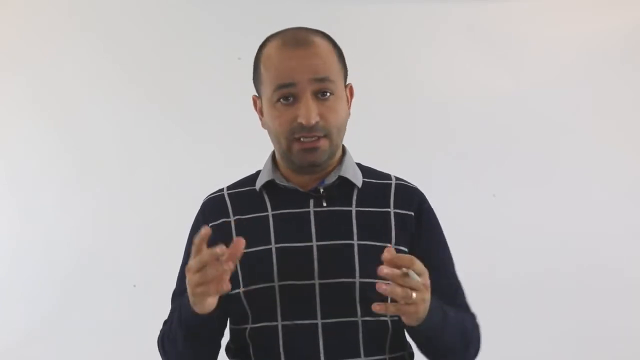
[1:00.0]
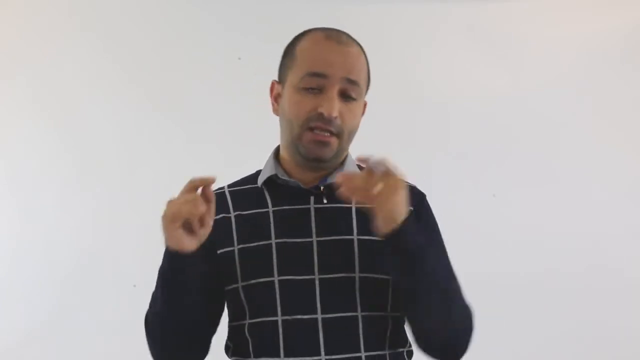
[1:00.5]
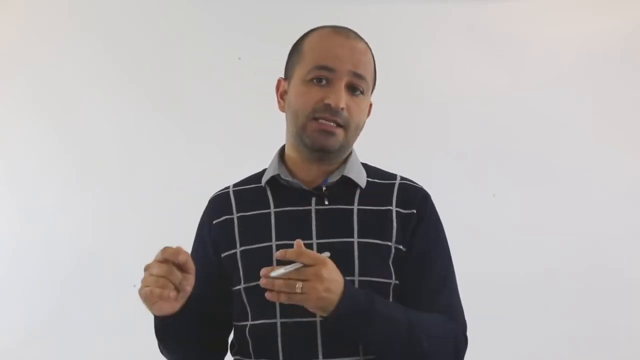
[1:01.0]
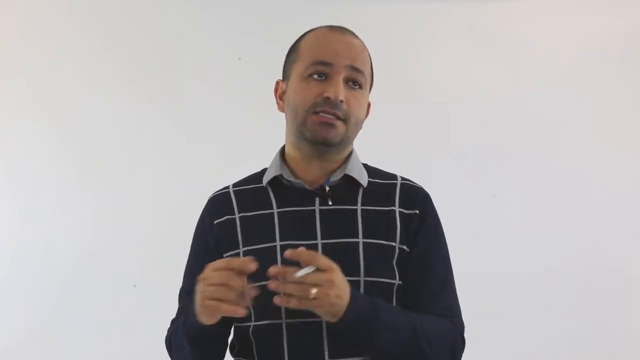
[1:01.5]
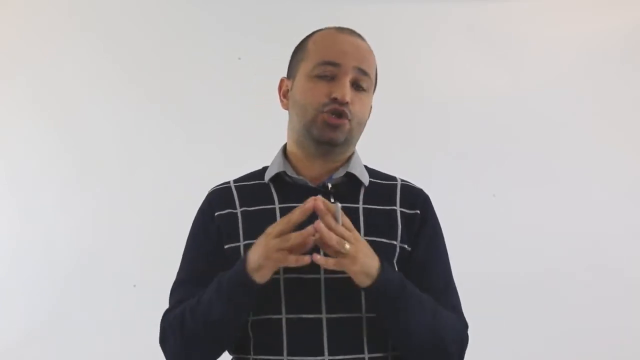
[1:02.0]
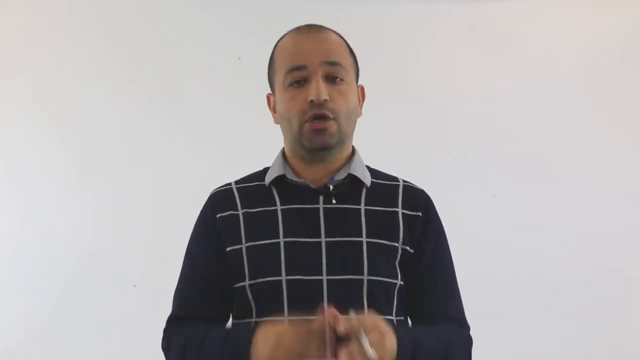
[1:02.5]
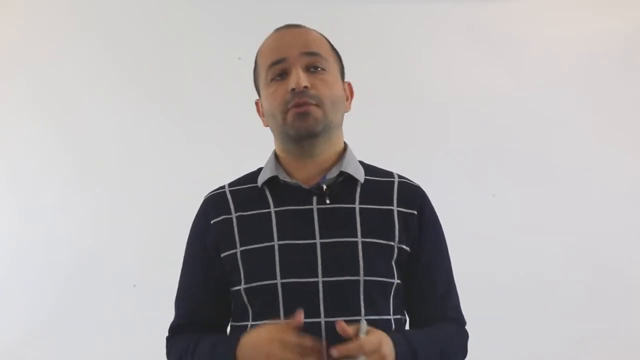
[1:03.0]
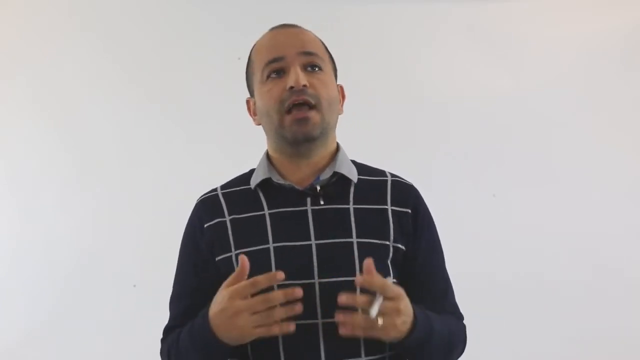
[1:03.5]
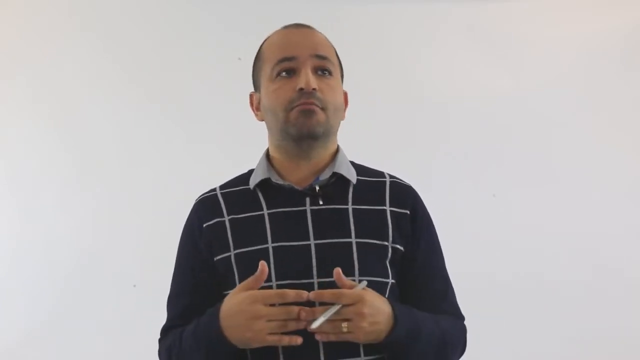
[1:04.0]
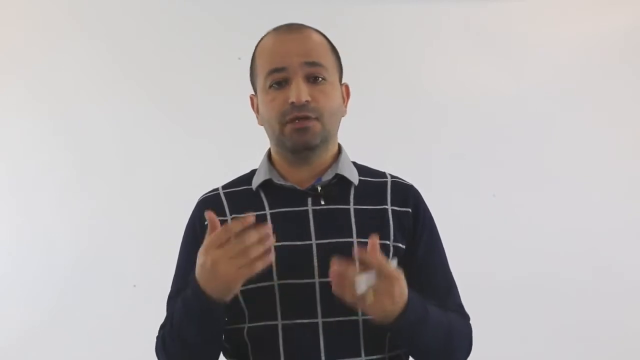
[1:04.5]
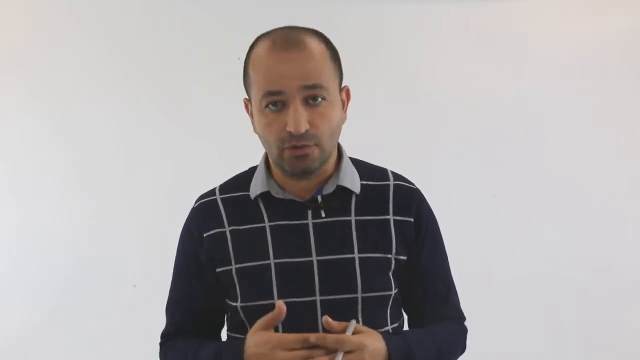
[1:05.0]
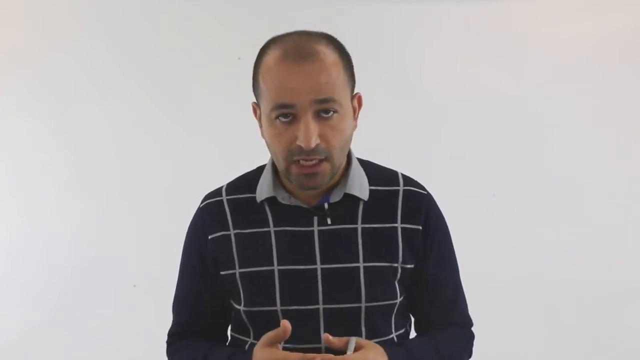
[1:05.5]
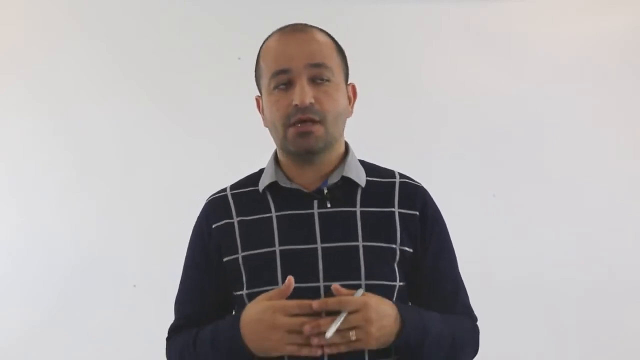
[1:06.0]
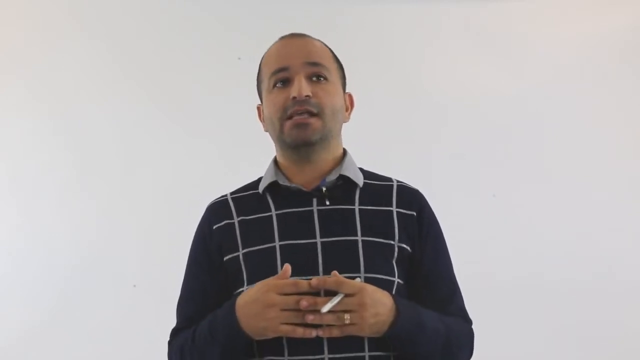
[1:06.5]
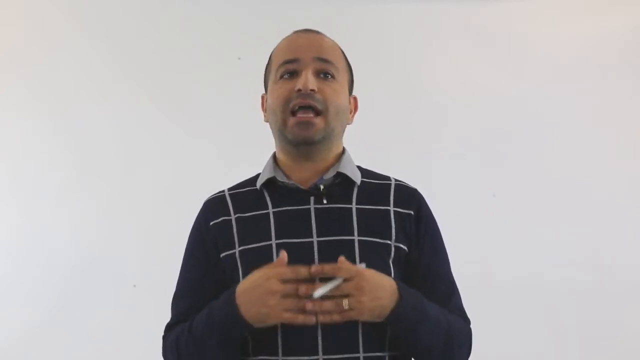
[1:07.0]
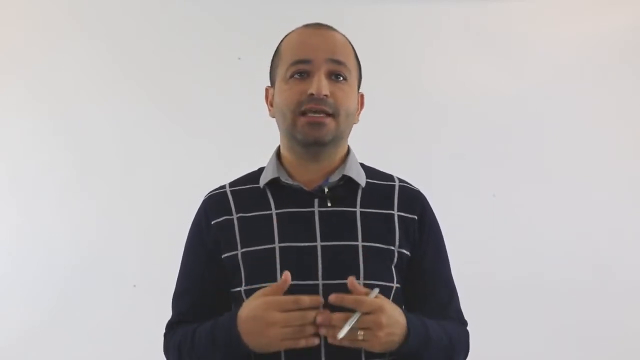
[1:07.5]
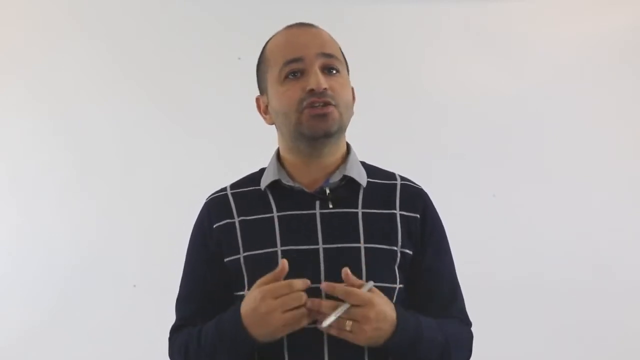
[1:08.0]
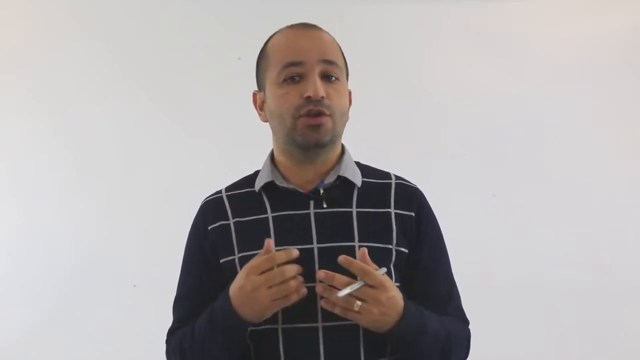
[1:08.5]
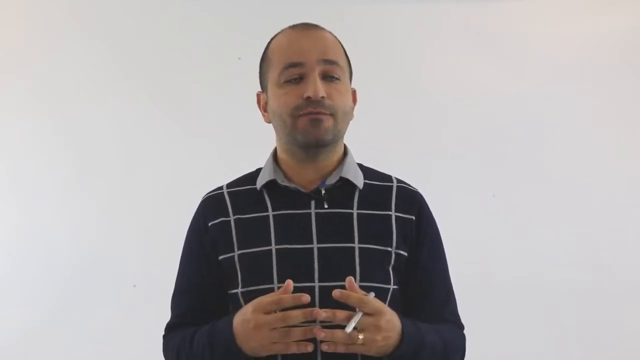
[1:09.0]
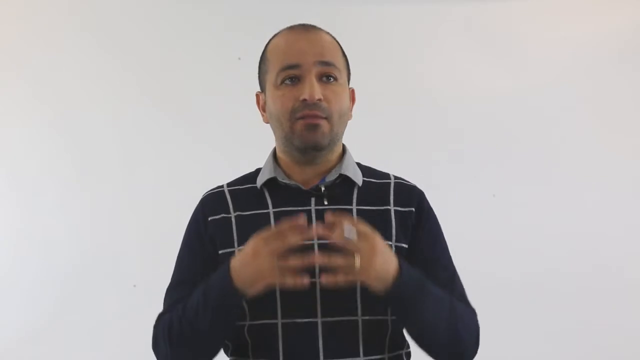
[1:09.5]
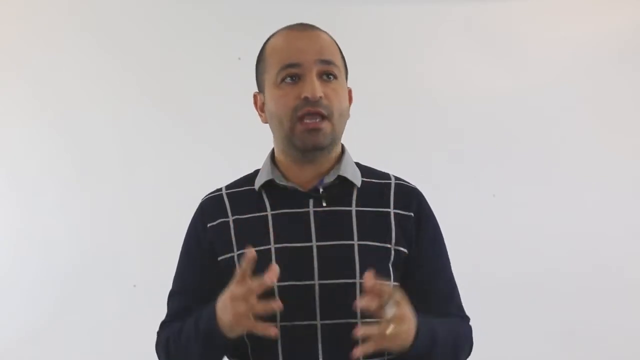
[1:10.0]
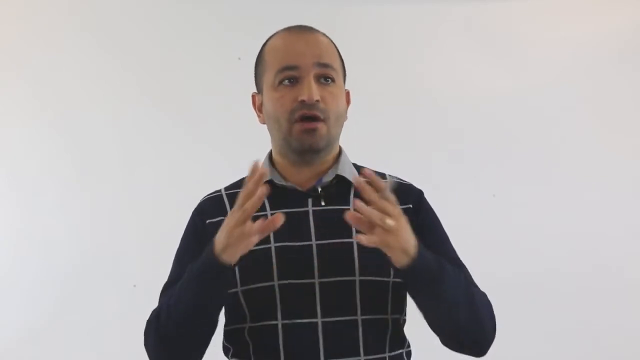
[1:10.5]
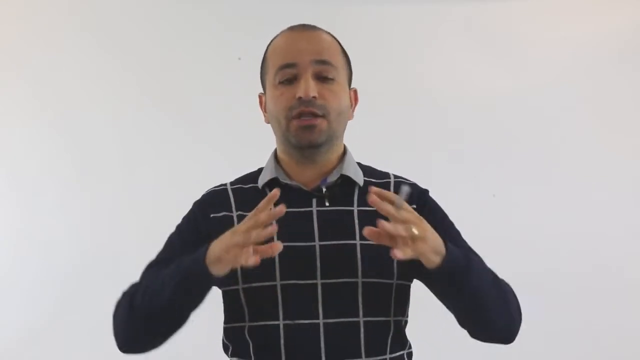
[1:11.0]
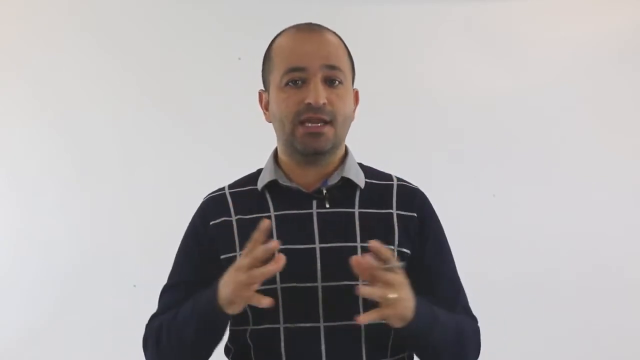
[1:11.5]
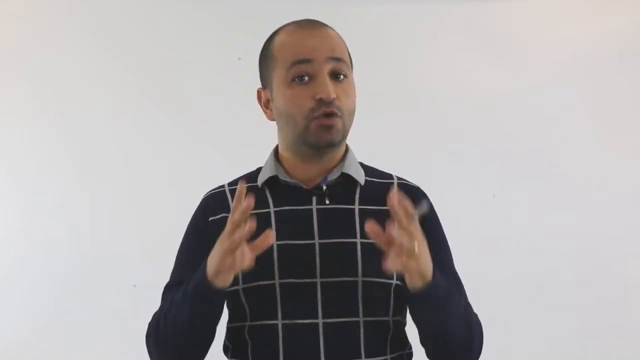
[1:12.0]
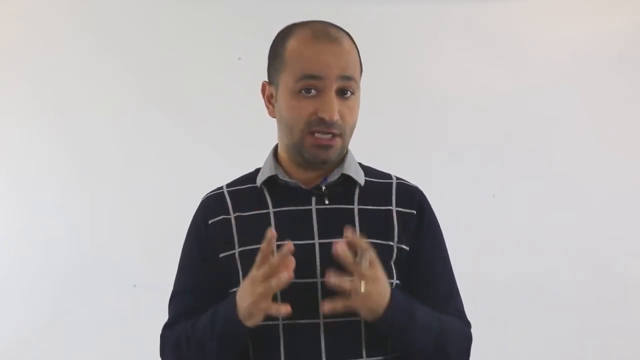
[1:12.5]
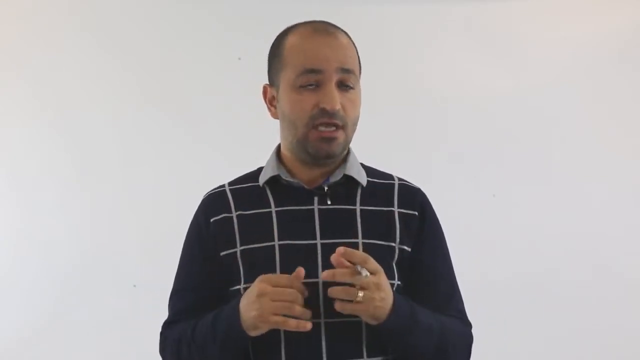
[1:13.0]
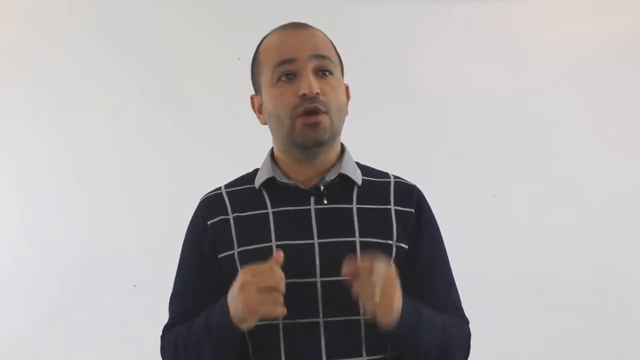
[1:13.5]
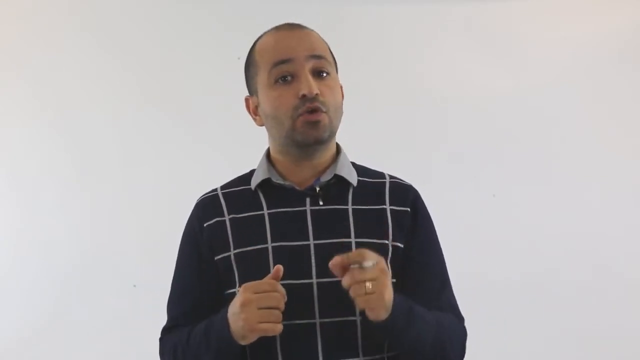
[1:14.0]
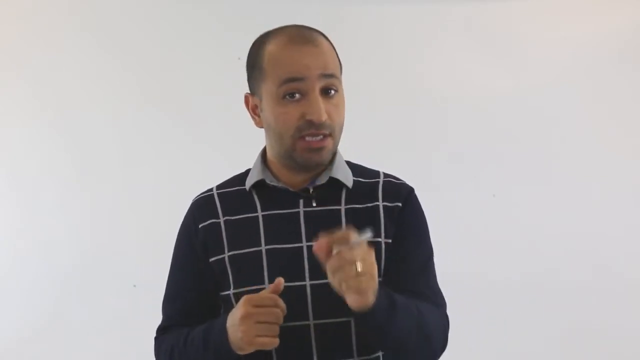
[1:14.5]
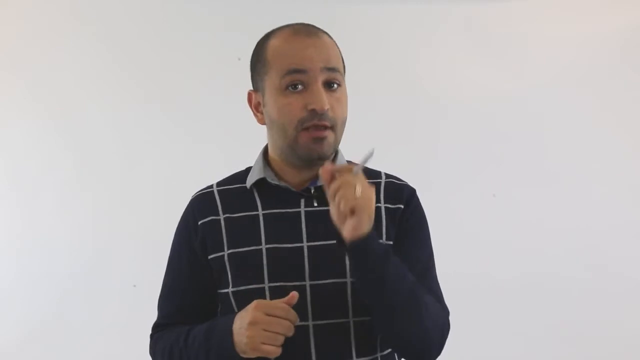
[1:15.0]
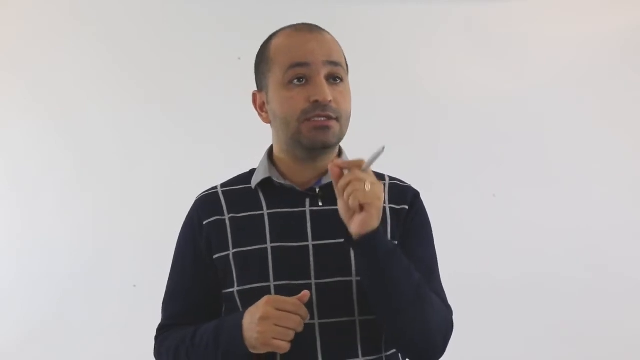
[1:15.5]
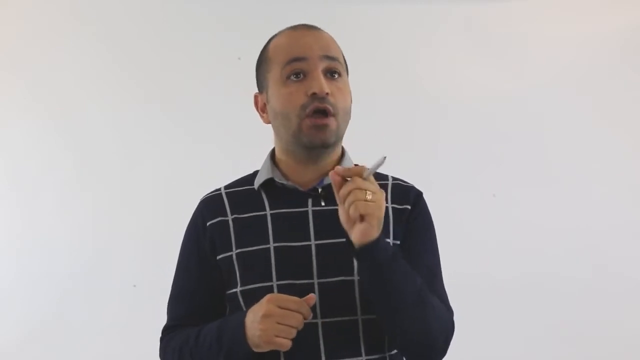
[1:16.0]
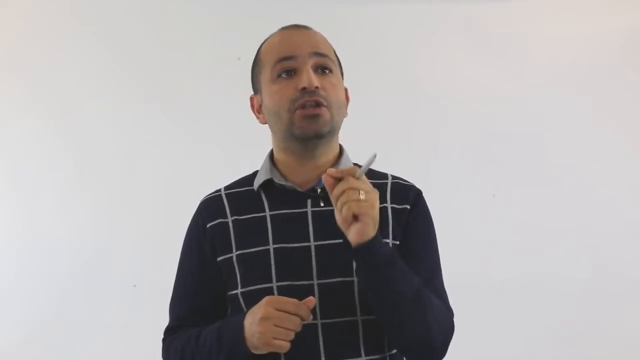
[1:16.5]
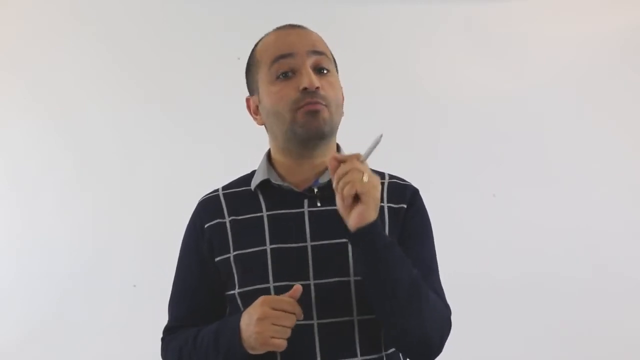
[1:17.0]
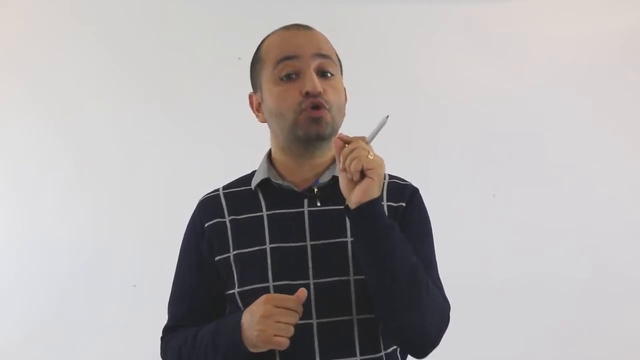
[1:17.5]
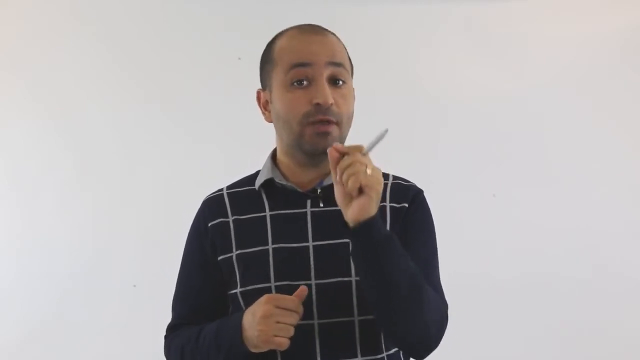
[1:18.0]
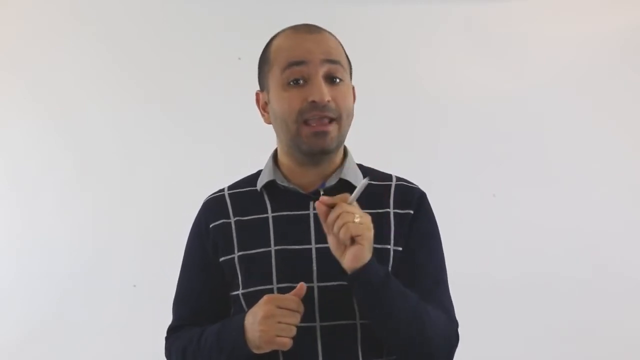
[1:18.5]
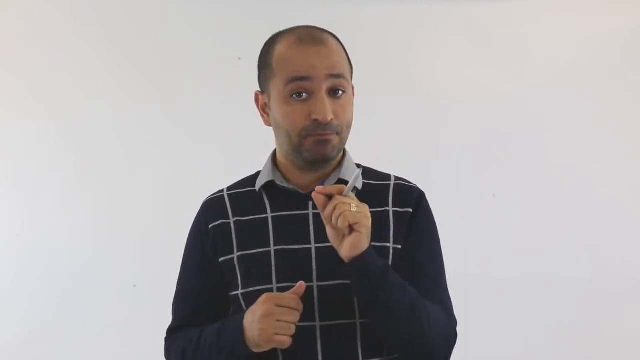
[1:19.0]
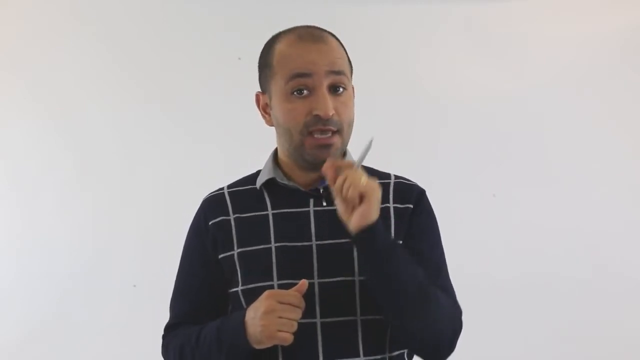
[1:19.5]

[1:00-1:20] A Middle Eastern man stares straight at the camera, talking to it and using his hands a lot. He is probably talking about the preceding question on massage techniques for a man who had a stroke four years ago and lost sensation in his left arm. He has a pencil in his left hand. He is very animated, with expressive facial expressions, and seems very passionate about the topic. He may be the instructor explaining the answer. No visuals on screen indicate the answer yet.